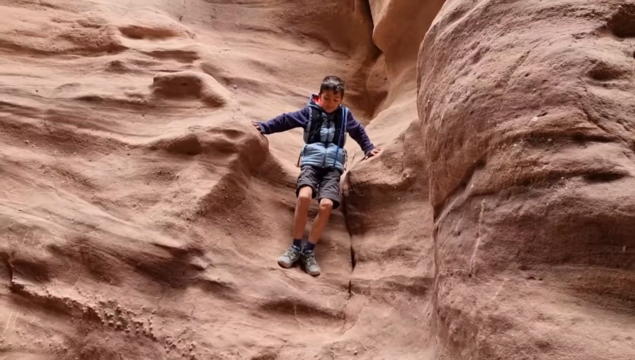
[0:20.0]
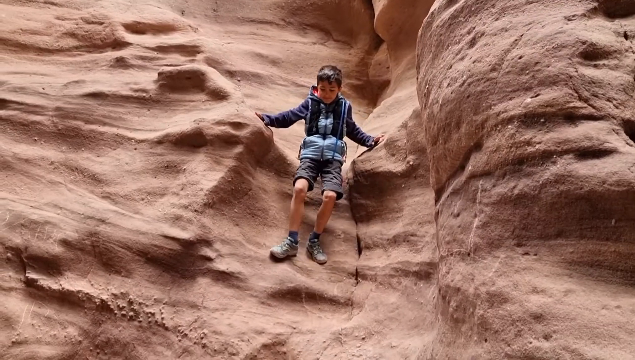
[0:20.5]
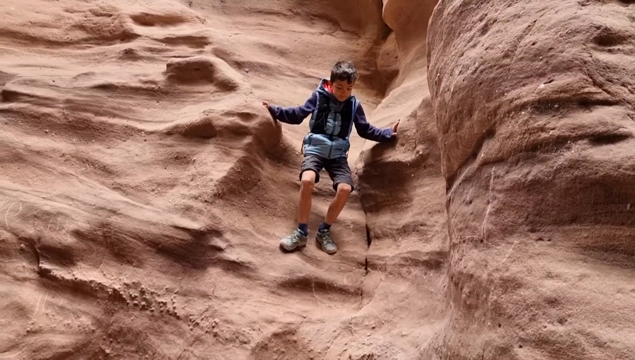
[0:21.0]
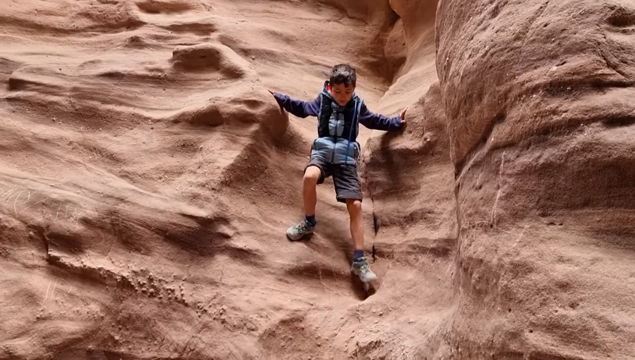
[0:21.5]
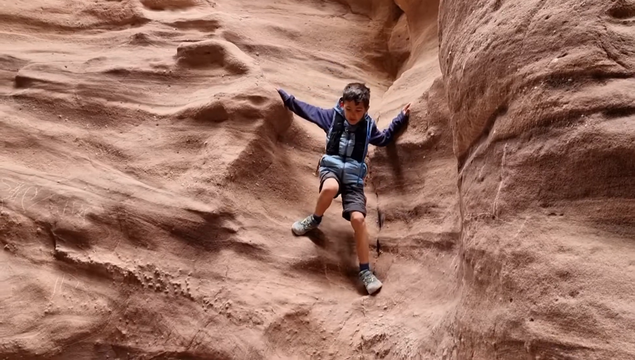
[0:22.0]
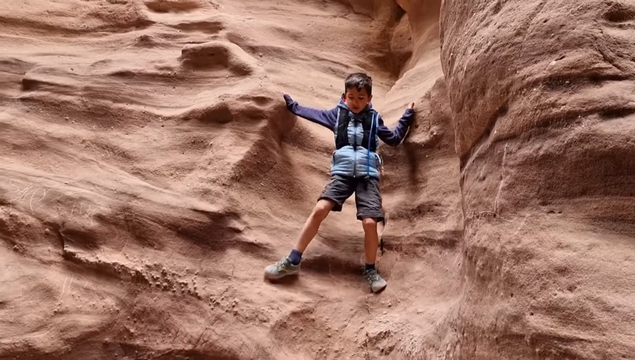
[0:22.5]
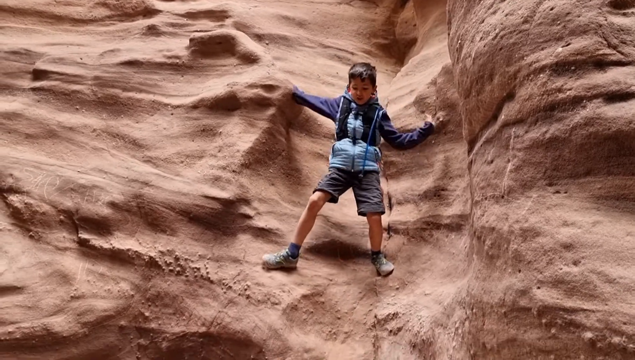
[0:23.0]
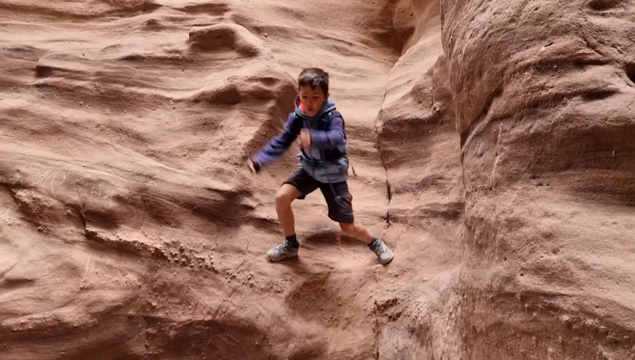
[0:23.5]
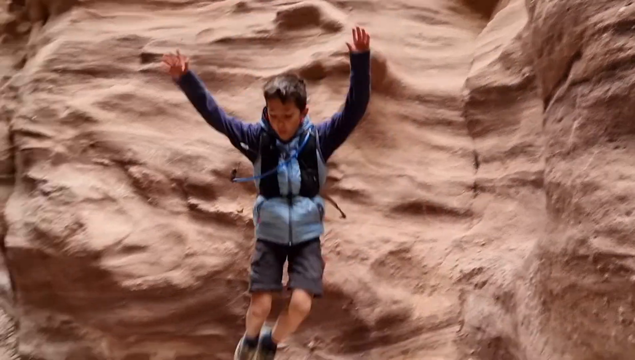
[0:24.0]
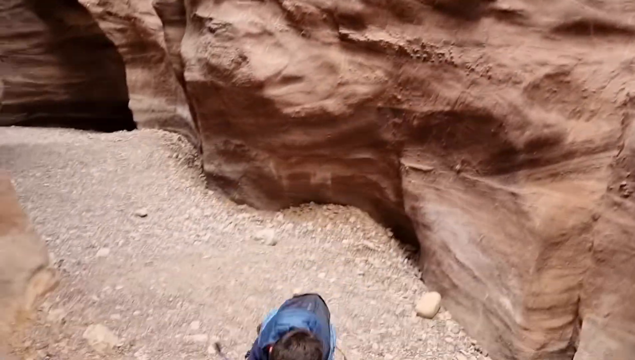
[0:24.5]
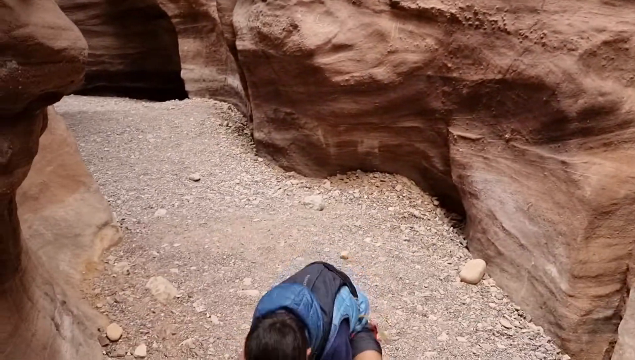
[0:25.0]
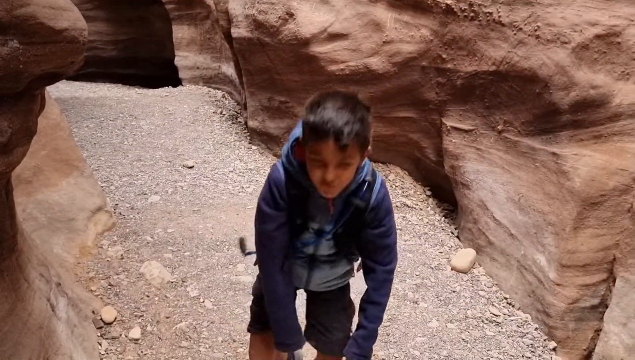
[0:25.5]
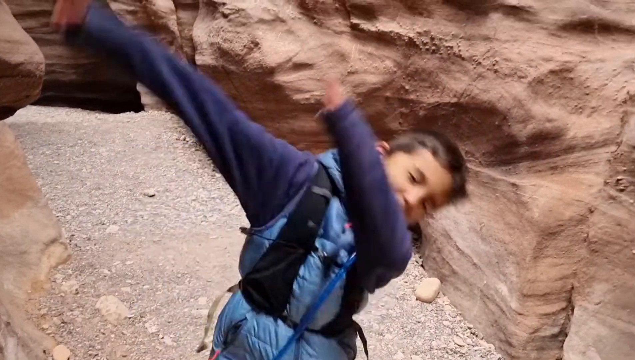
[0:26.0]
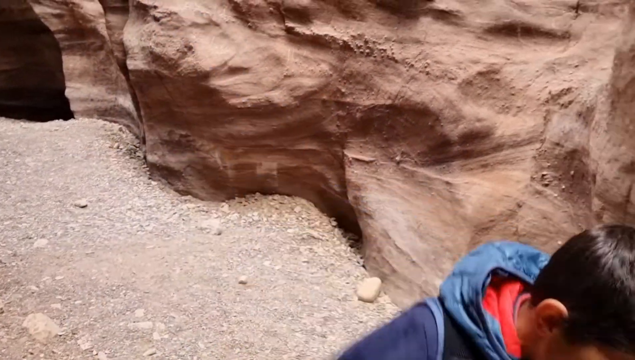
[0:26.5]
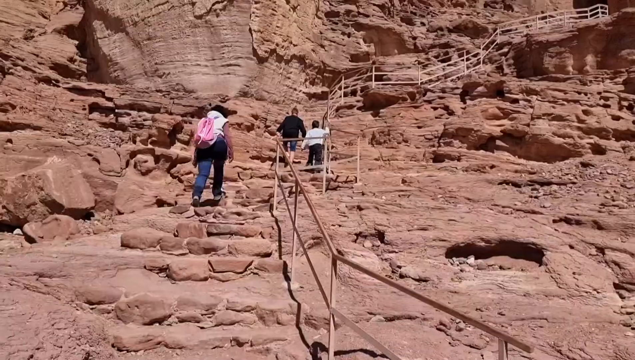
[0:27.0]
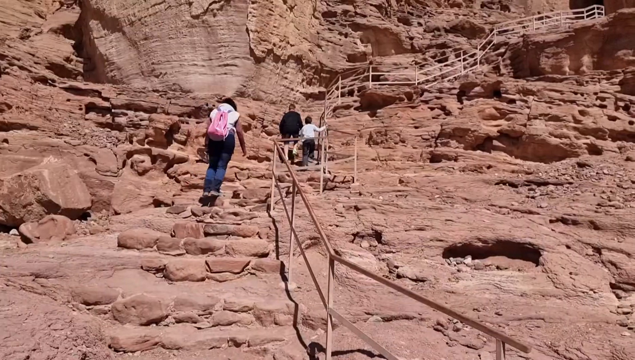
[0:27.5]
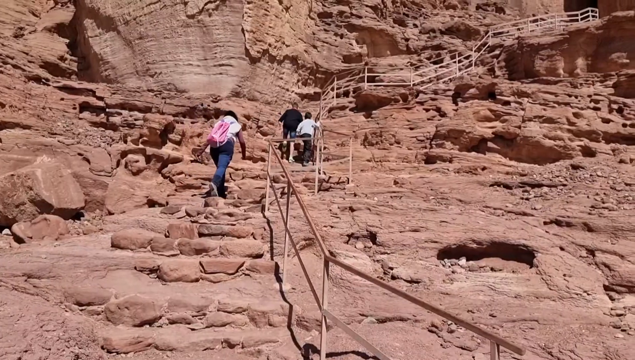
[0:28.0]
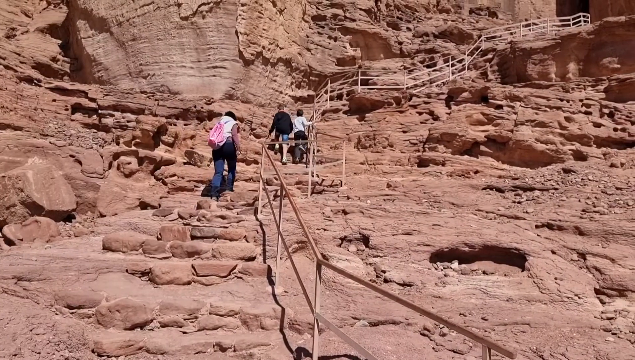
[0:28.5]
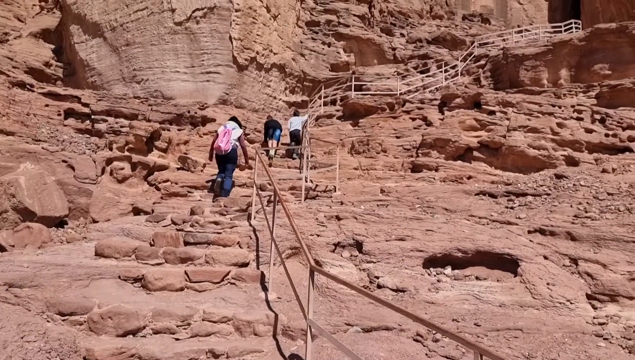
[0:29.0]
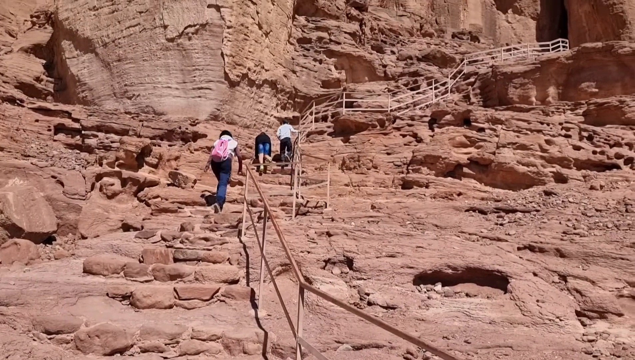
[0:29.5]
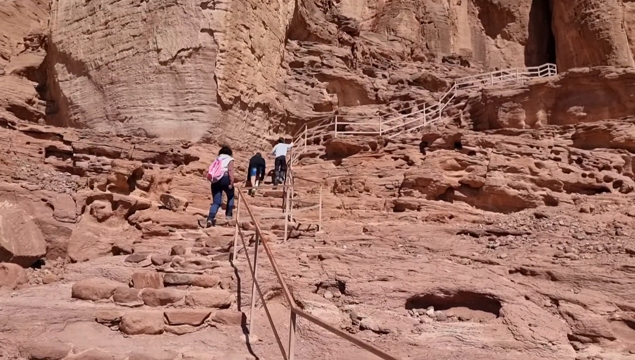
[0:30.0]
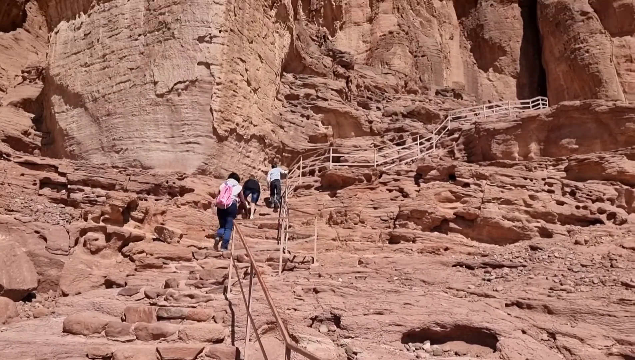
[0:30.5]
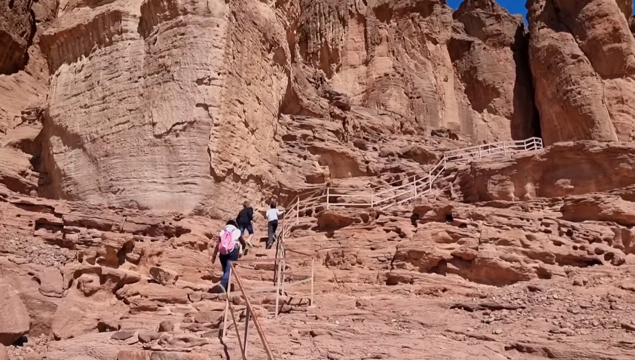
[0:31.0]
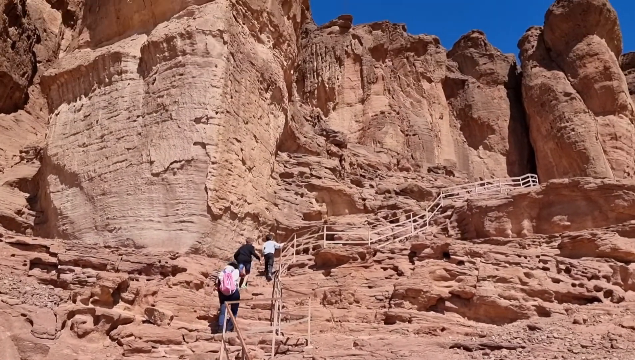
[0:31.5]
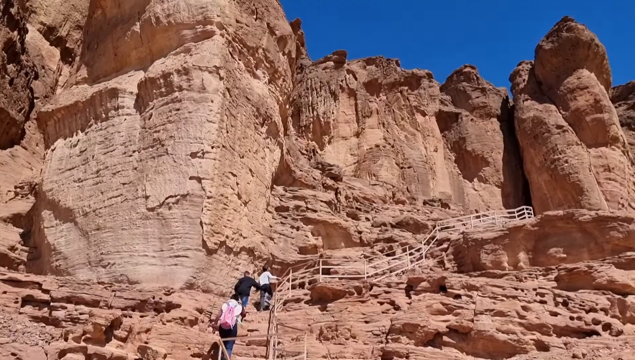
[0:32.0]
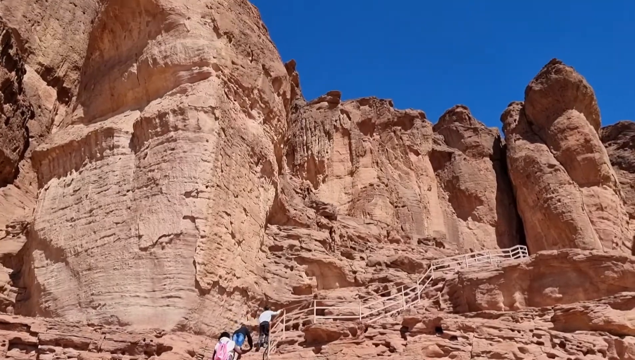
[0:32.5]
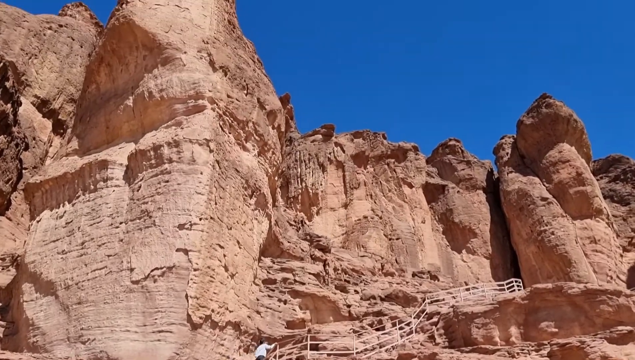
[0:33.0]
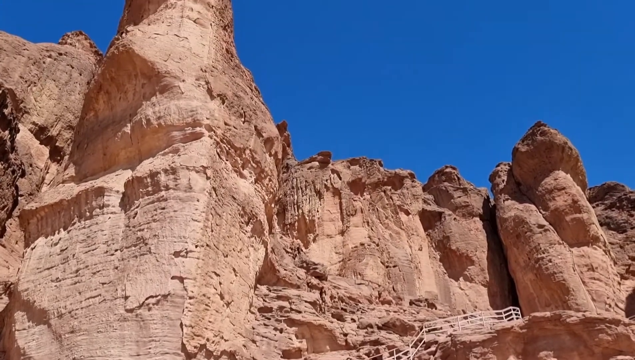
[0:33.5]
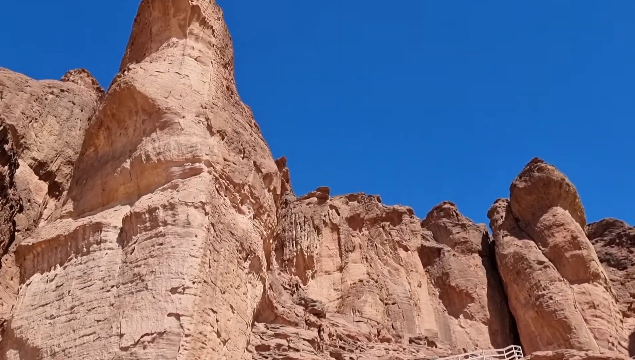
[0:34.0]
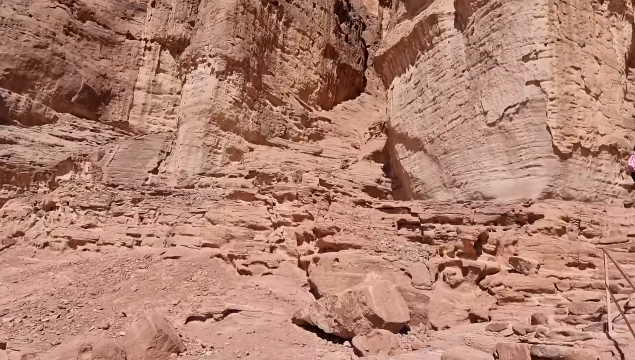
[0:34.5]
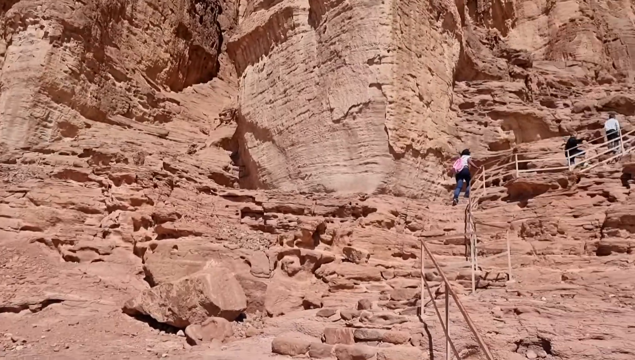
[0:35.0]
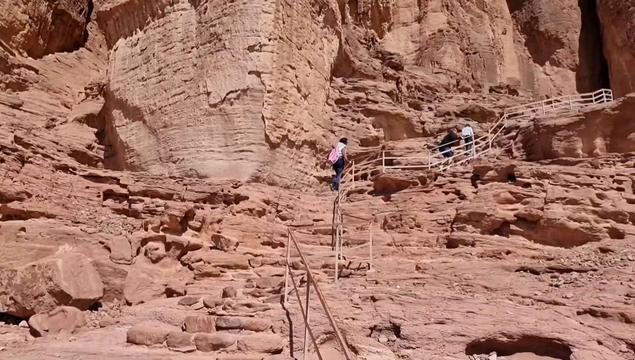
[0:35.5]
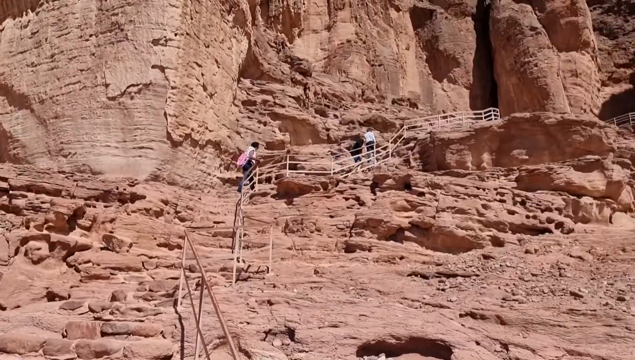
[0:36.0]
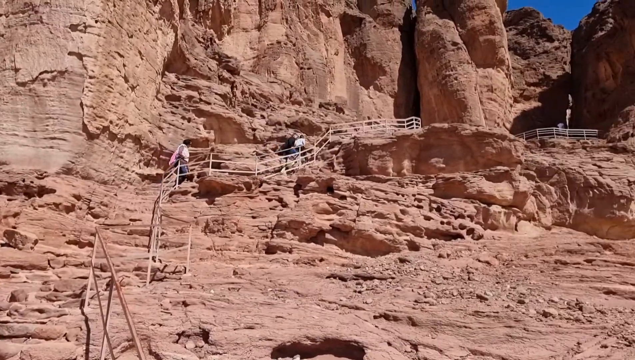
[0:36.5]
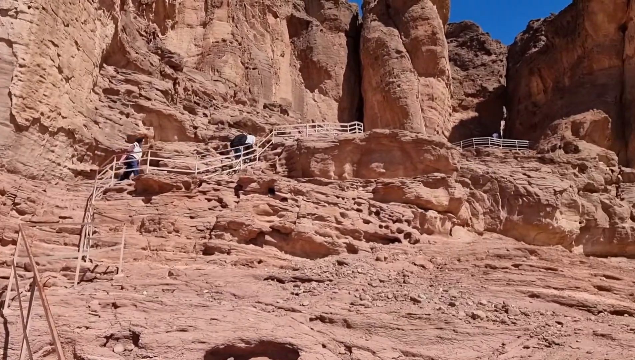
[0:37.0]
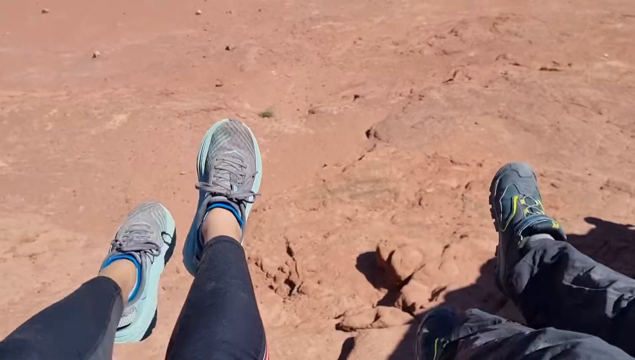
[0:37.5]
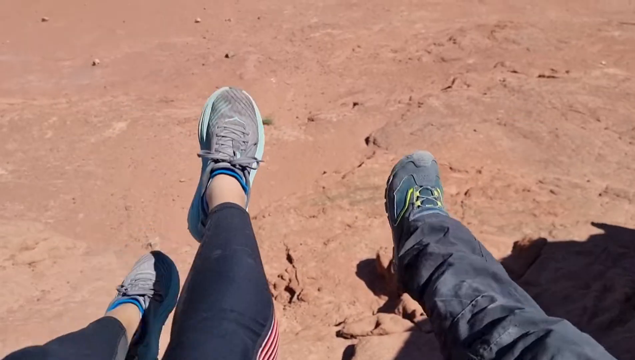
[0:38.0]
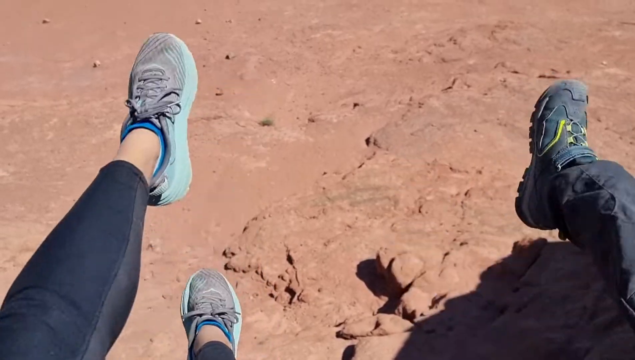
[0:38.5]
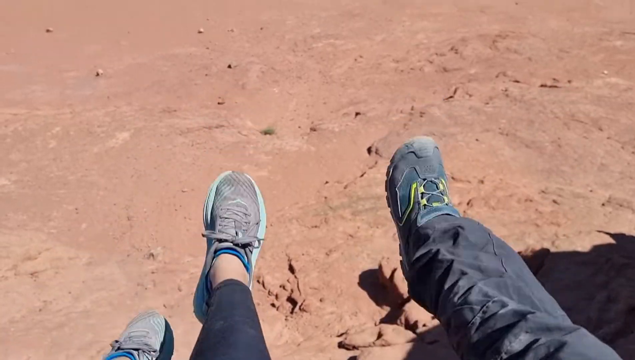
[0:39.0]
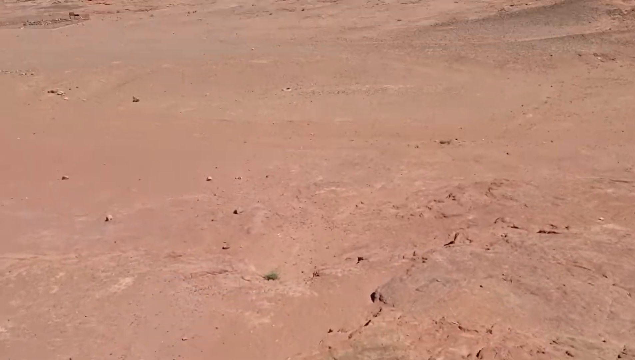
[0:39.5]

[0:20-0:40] Children play in a desert landscape that is probably some kind of park. The landscape is very red-brown in color. The kids, probably about elementary school age, wear sneakers, shorts and jackets and climb on the rocks. At one point a couple of legs dangle and kick somewhat playfully, as though their owner is sitting on the side of the rock. The video cuts to a large staircase with a metal railing, which apparently has about three horizontal poles propped up by white vertical poles. The family climbs the stairs.